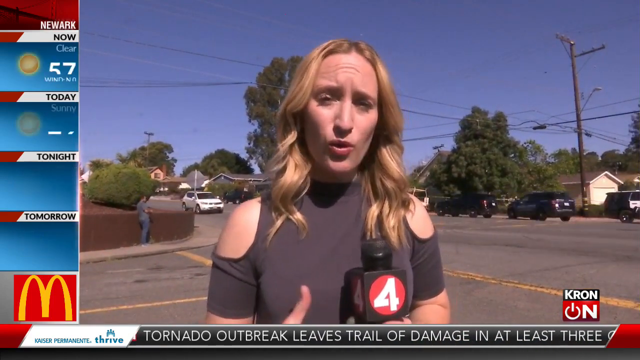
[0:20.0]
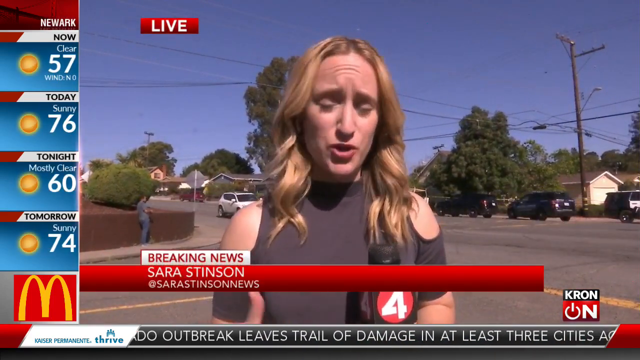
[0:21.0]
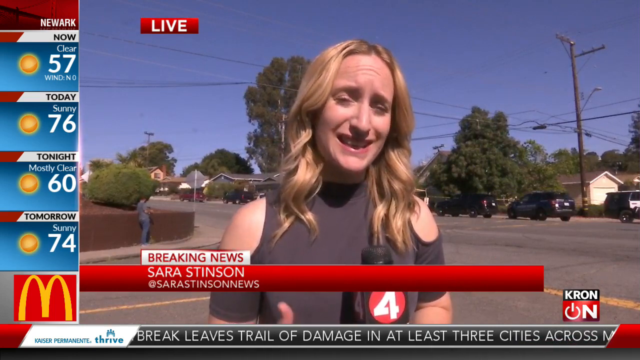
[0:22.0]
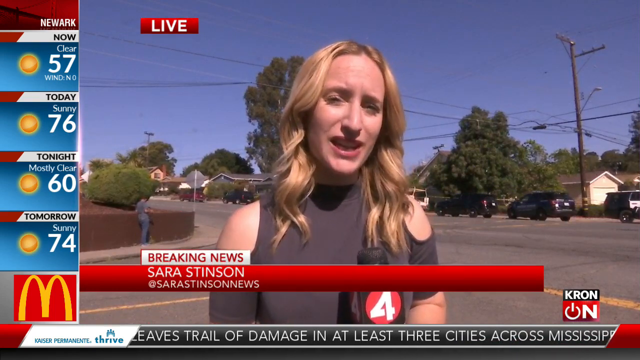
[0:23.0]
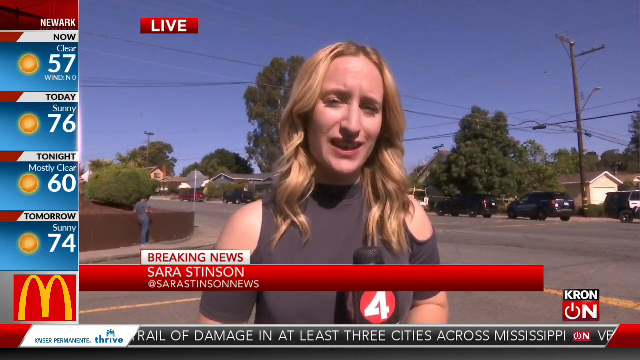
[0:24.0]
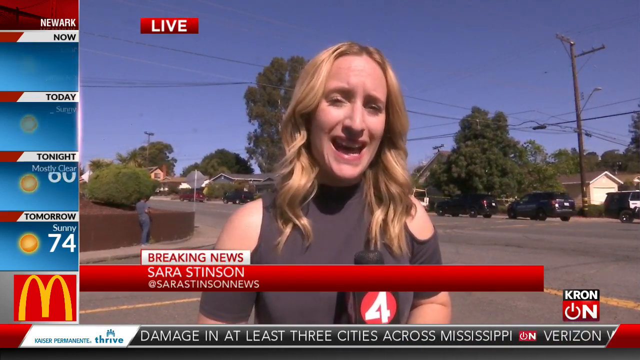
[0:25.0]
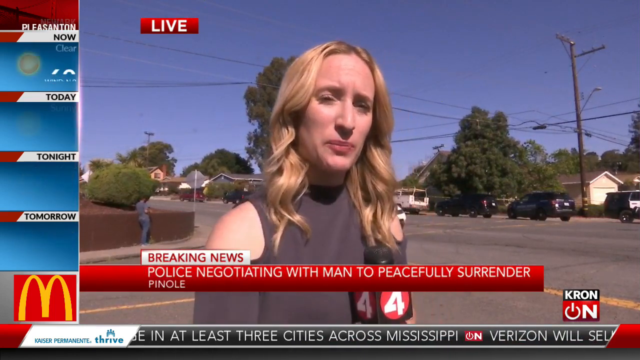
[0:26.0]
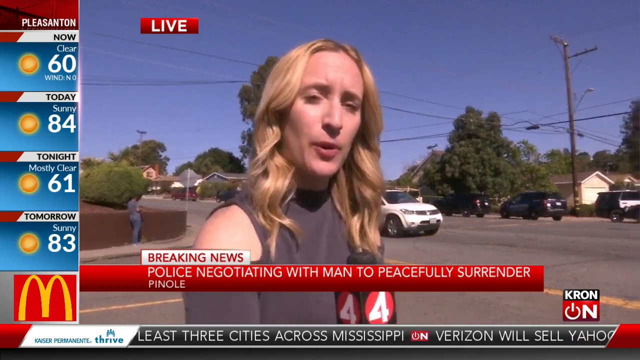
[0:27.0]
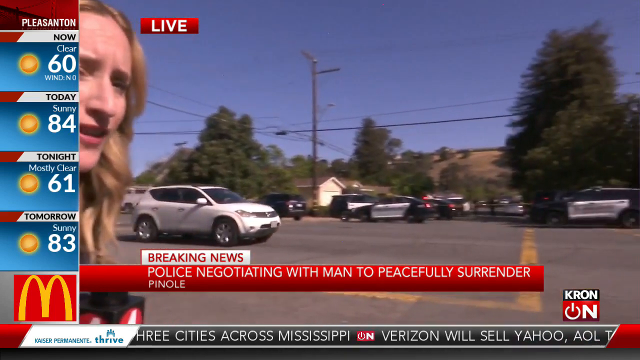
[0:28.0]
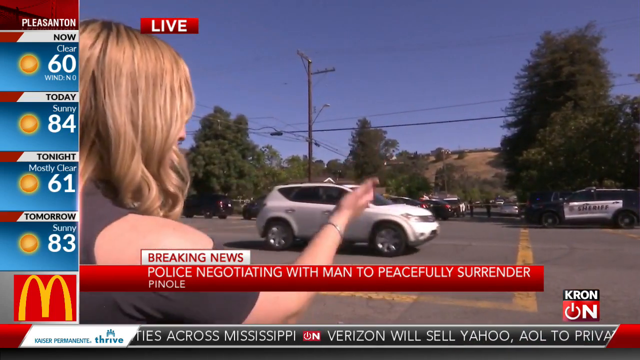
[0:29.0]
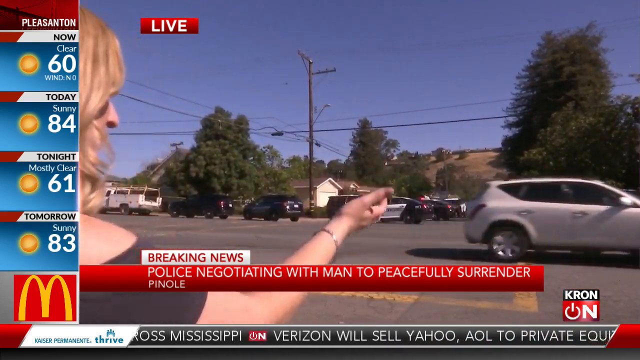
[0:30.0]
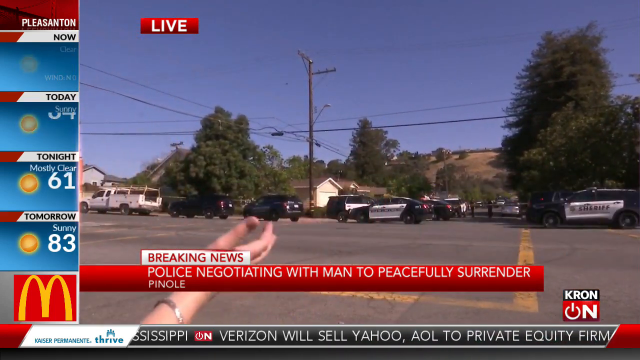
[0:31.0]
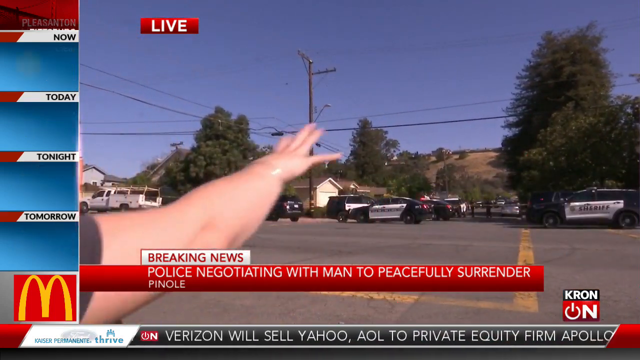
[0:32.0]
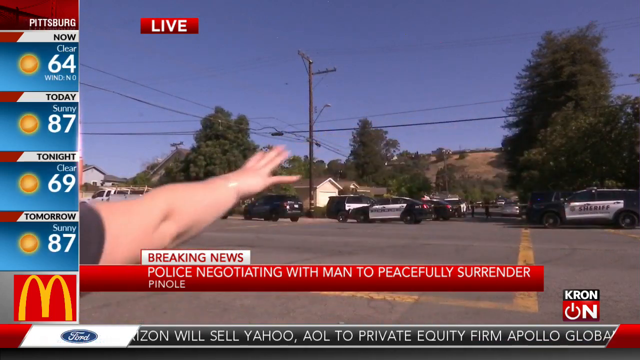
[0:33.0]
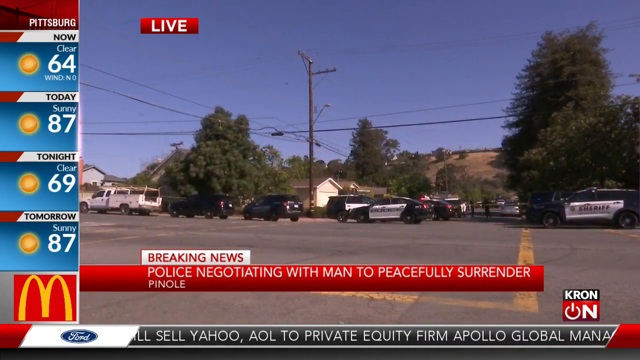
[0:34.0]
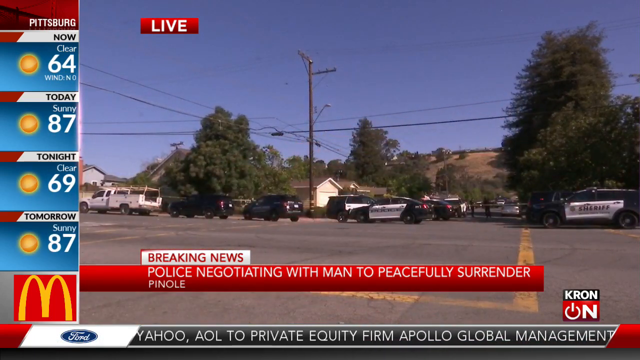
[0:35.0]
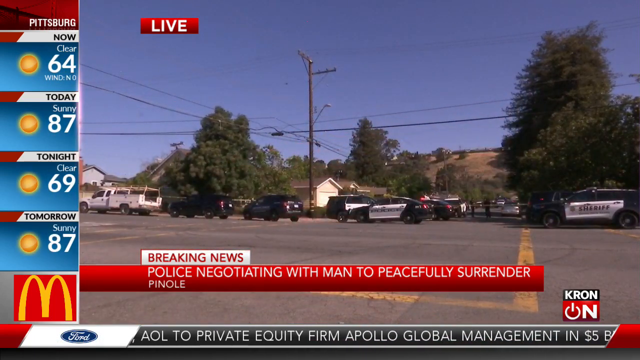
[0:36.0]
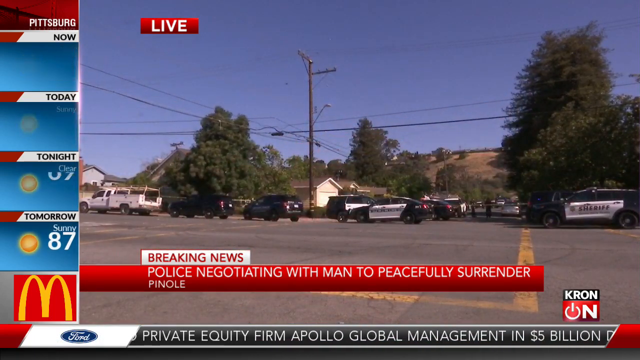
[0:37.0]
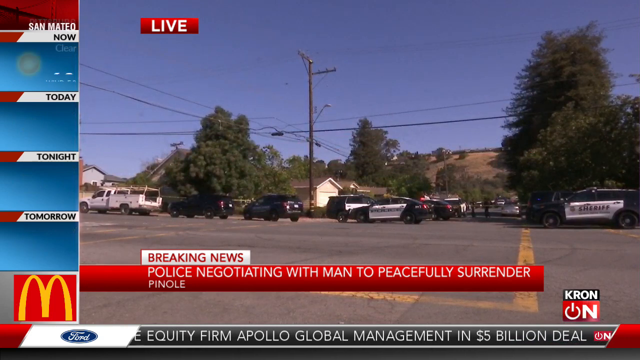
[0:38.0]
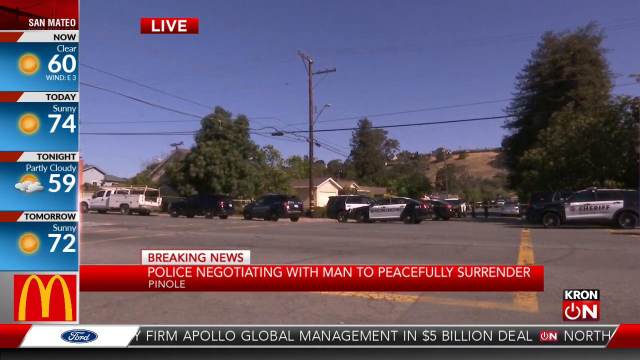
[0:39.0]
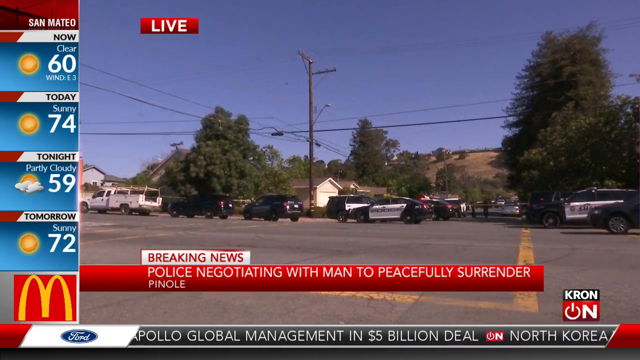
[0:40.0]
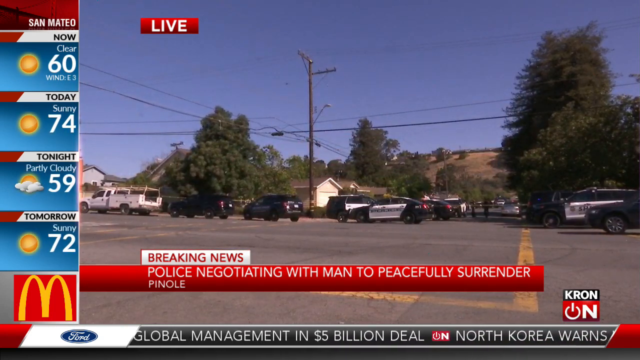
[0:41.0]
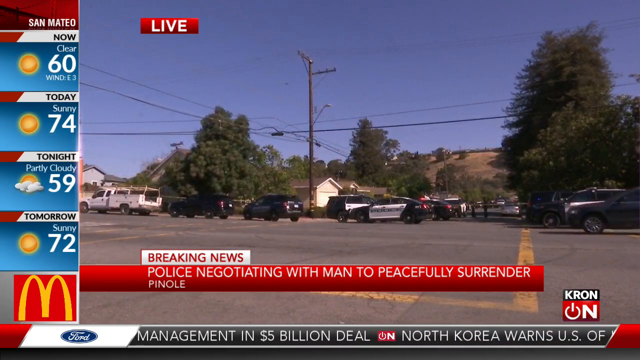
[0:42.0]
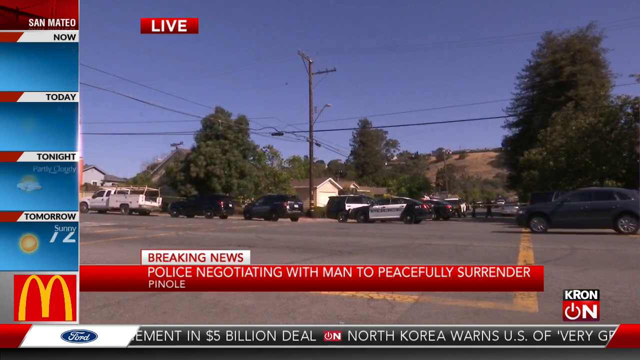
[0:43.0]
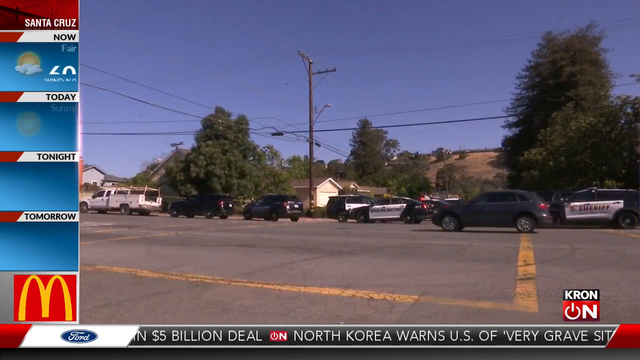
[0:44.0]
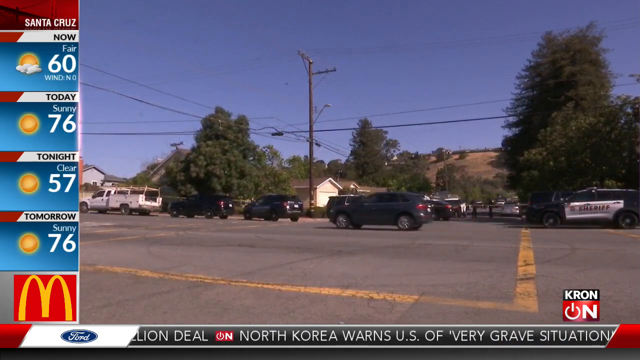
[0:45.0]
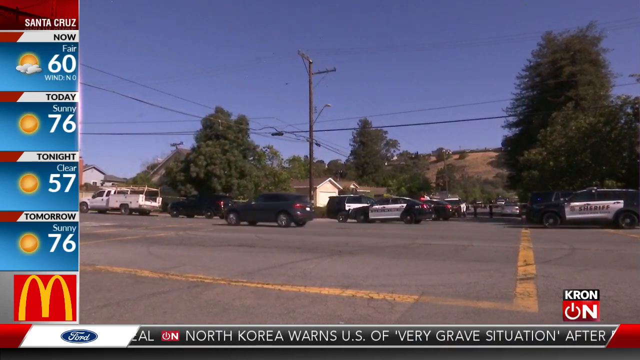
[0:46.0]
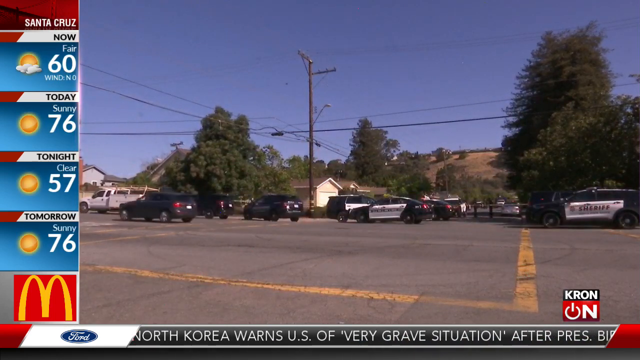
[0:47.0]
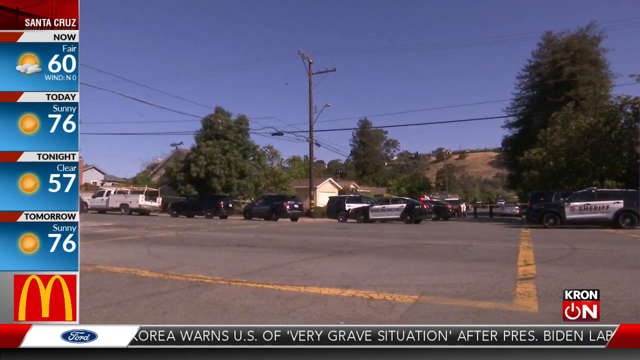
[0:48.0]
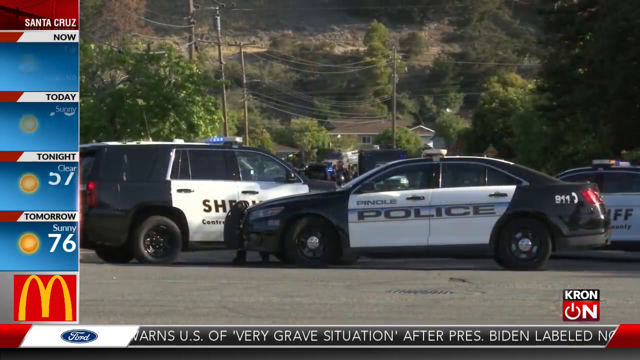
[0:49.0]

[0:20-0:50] A field reporter is on screen, holding a microphone in her left hand that bears the number 4. A small bar at the top reads "Live", and a red bar coming from the left side of the screen identifies the reporter as Sarah Stinton, with a small white bar on top of it reading "Breaking News". The column on the left of the screen now shows the weather in Newark, and the network is identified as Kron in the bottom right of the image. The reporter talks while looking at the camera and opens her hands toward the screen. The camera moves from the reporter, who remains on the left side of the image, to the street in front of her, where there are many police cars; her hand appears waving, as if indicating where the situation is happening. Then only the police cars are visible, many of them, and the red bar below says that police are negotiating with men to peacefully surrender in Pinole. An unrelated car crosses the scene, and a bar shows passing news items. The camera zooms in on the police cars.